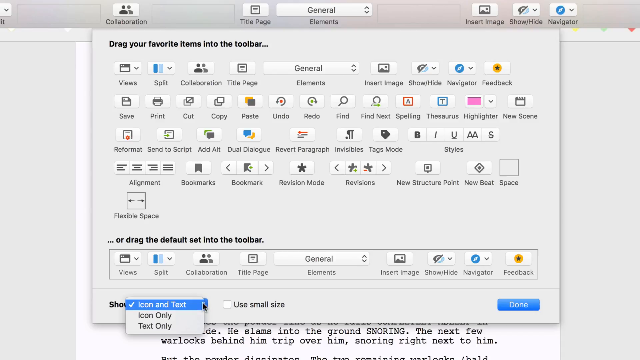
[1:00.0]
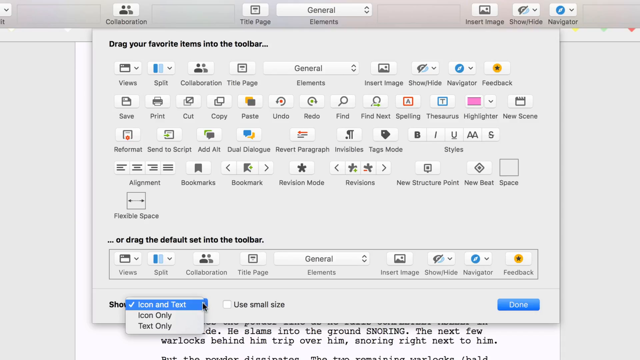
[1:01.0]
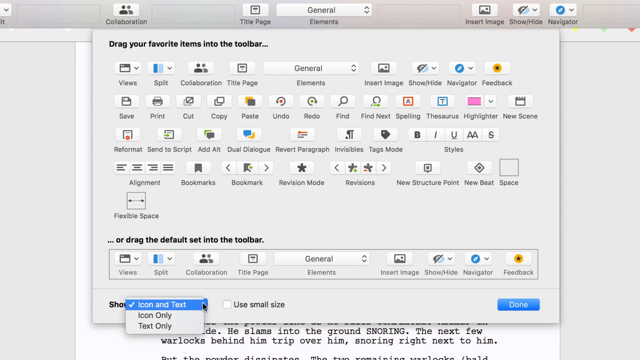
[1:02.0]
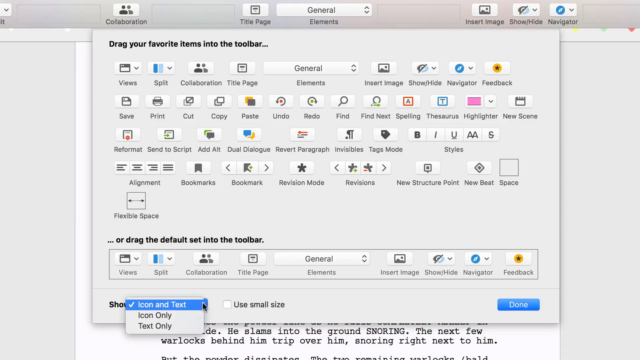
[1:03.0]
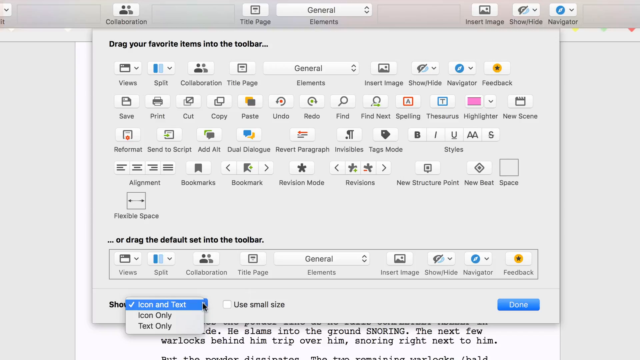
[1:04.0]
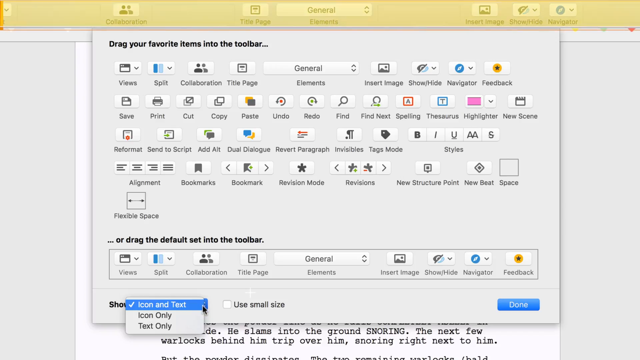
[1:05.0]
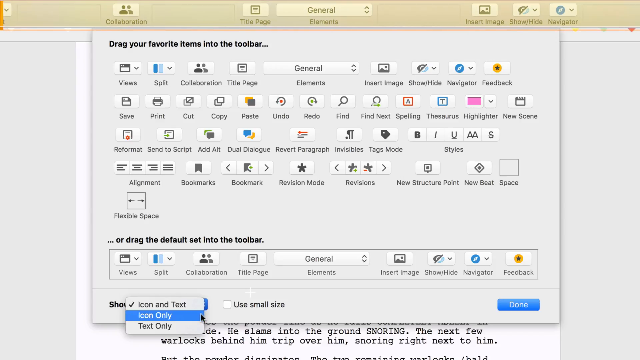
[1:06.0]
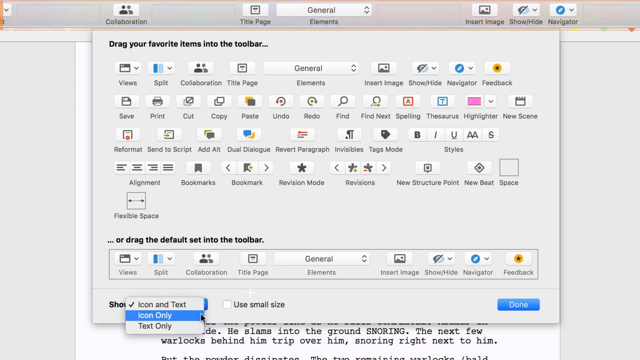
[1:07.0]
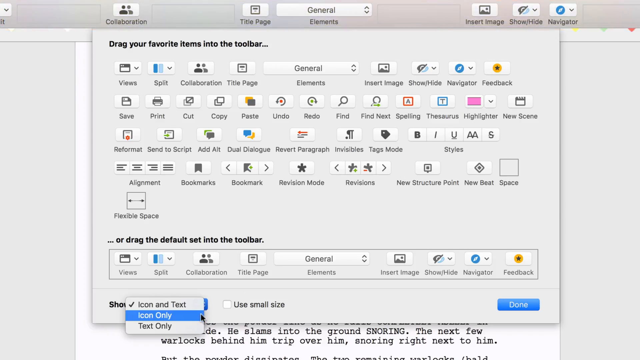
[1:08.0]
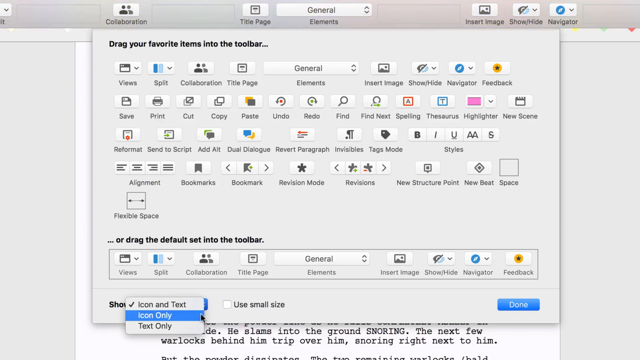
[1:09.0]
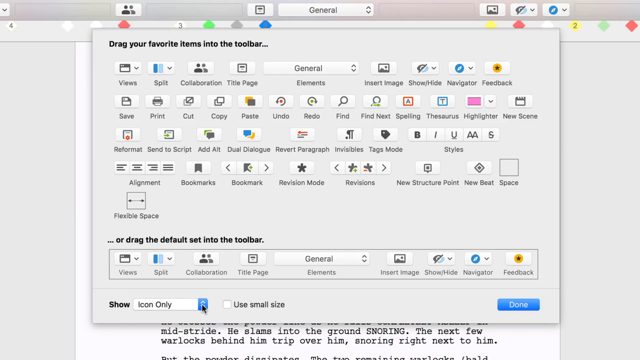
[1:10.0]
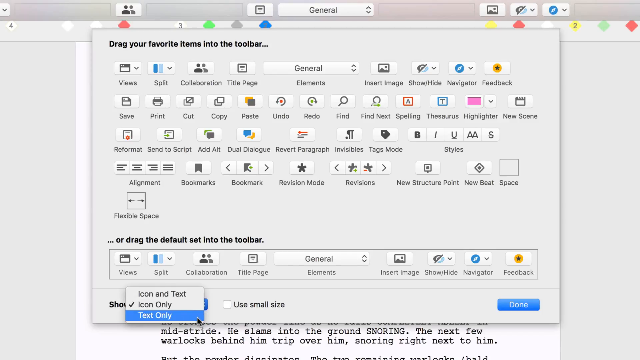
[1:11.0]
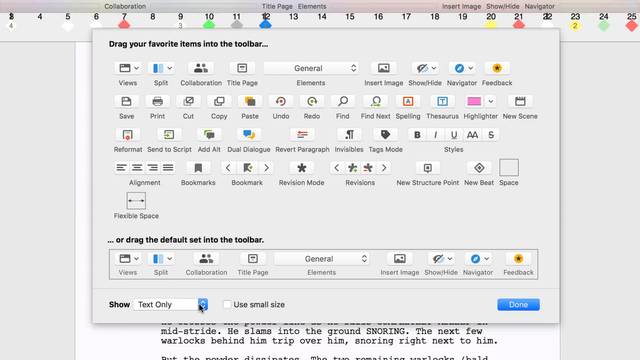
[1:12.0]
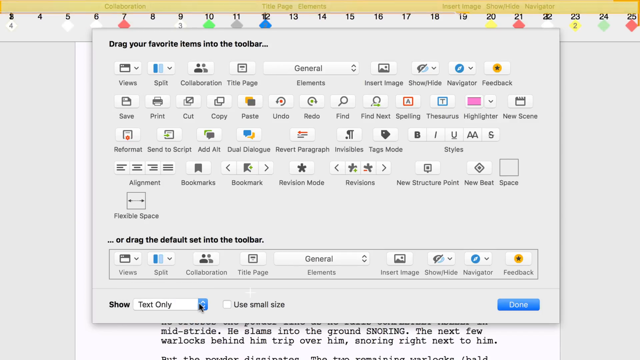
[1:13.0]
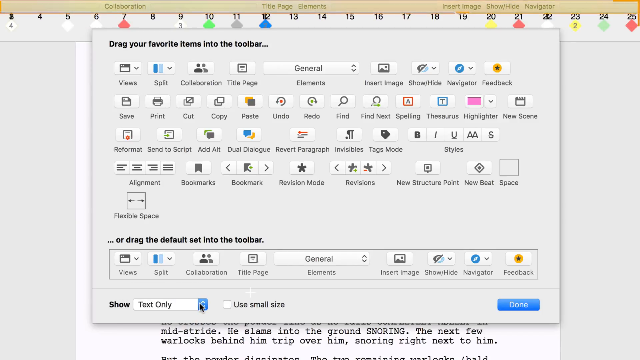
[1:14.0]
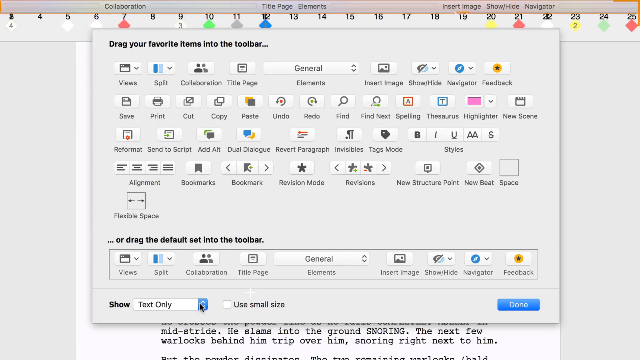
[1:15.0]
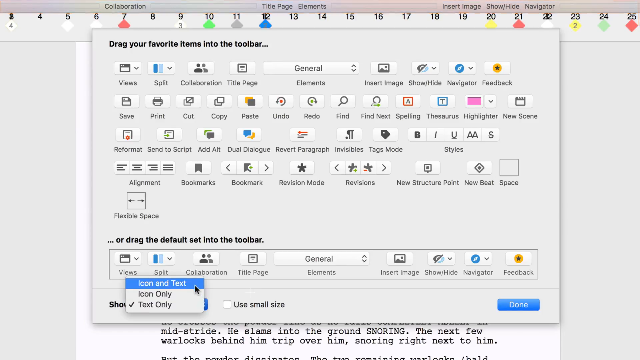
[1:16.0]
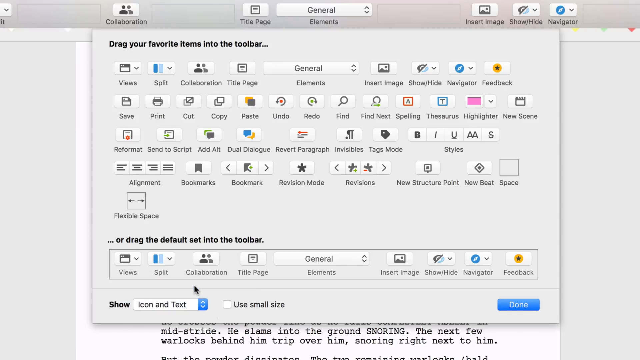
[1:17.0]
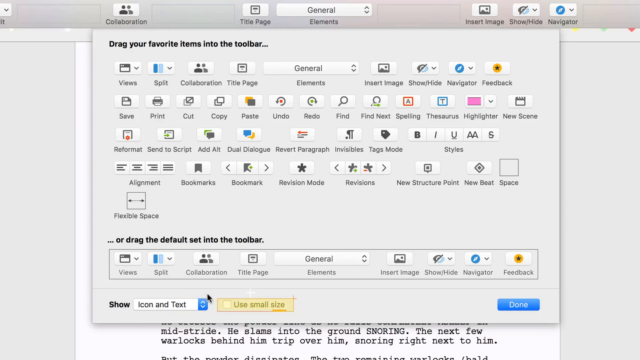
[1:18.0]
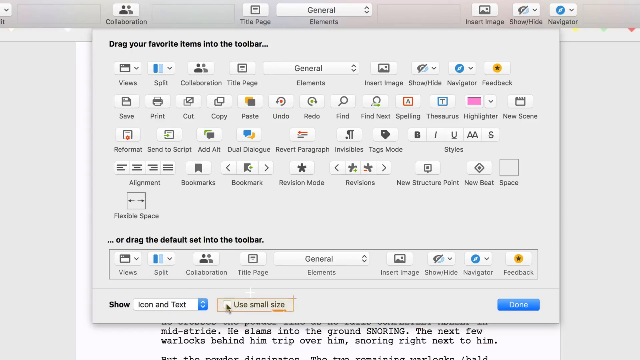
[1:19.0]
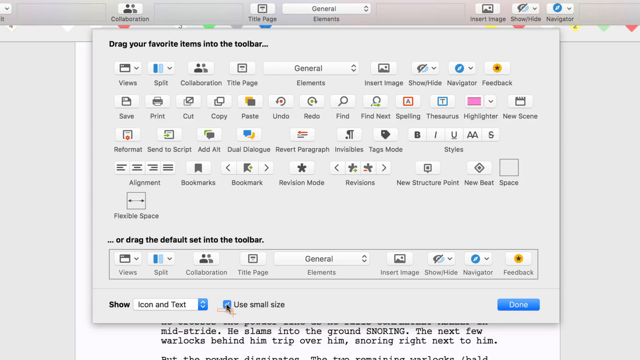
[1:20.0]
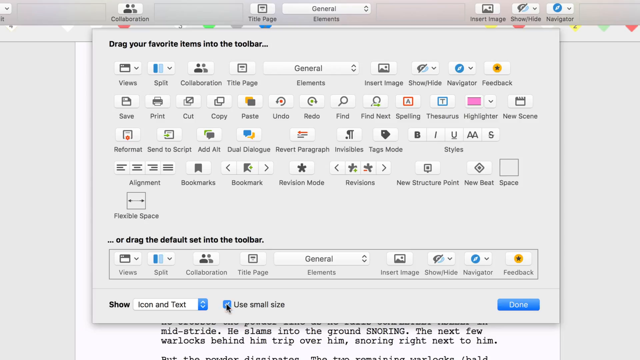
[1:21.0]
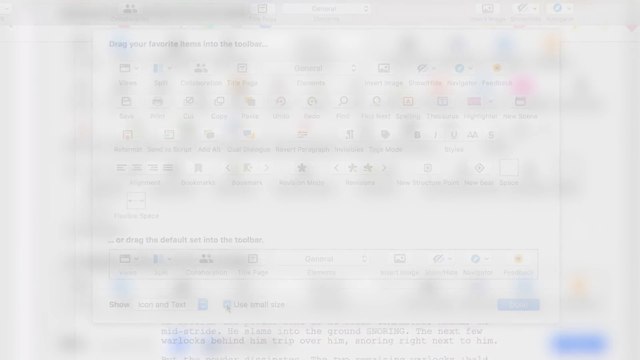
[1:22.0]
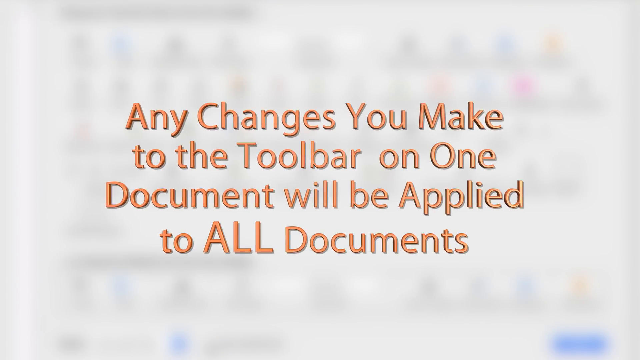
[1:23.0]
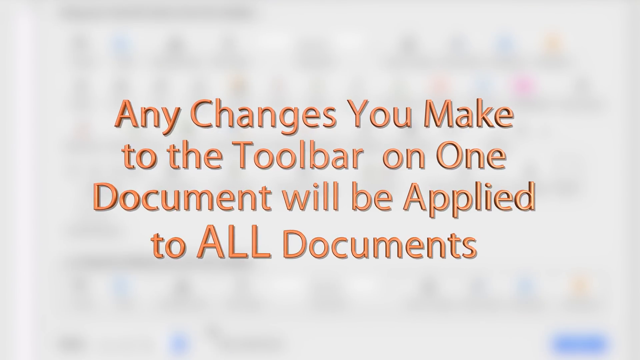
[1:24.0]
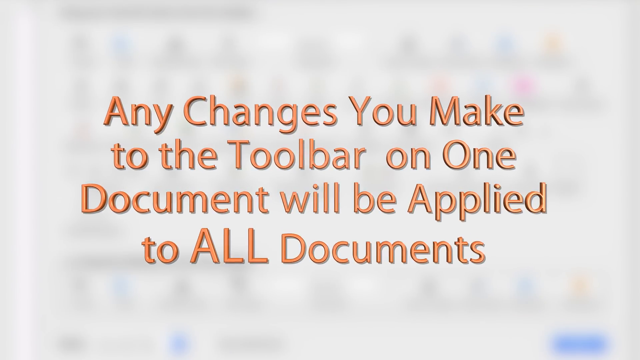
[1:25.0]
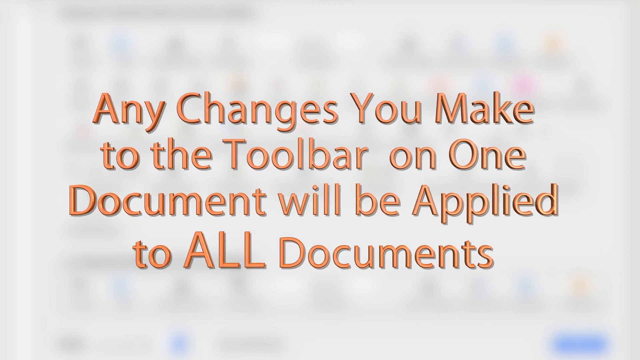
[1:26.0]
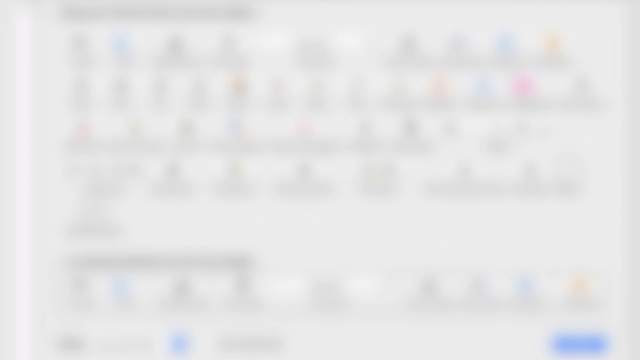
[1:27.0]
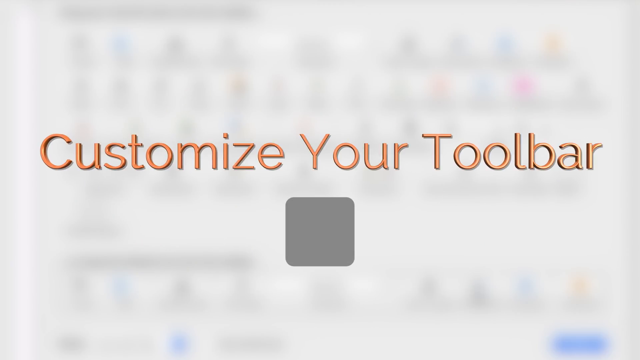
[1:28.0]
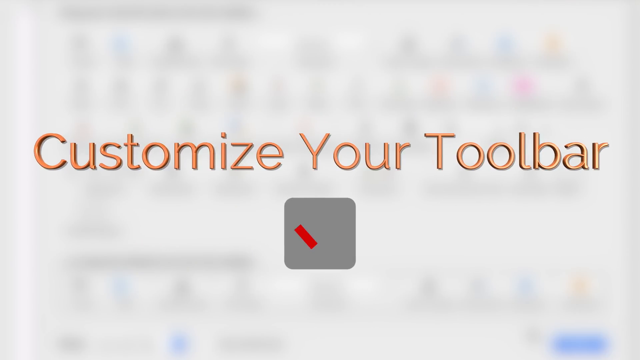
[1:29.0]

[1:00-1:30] The toolbar customization screen shows a very large square filled with icons and symbols representing different actions in the application, which can be dragged to the top of the screen to create a custom toolbar. At the very bottom is a highlighted section that says "icon and text," where the black mouse cursor rests for a while as the view holds still. Suddenly the top bar glows gold and then returns to its normal color. The cursor scrolls down and chooses "icon only," then clicks on that section again and chooses "text only," and the top glows again, highlighting the changed area, a section at the top that says "title page collaboration and insert image show hide navigator." It glows for a little while, then the cursor scrolls back up and clicks "icon and text" again, returning the toolbar to how it was, and then clicks a small checkbox that says "use small size," and the size changes. The screen blurs and text appears reading "any changes you make to the toolbar in one document will be applied to all documents," which zooms in. Then the phrase "customize your toolbar" appears with a box containing an animated checkmark.